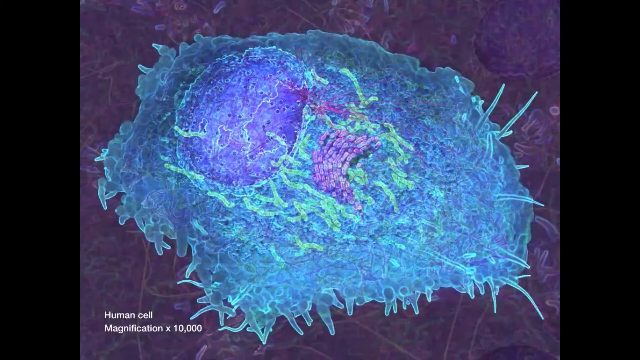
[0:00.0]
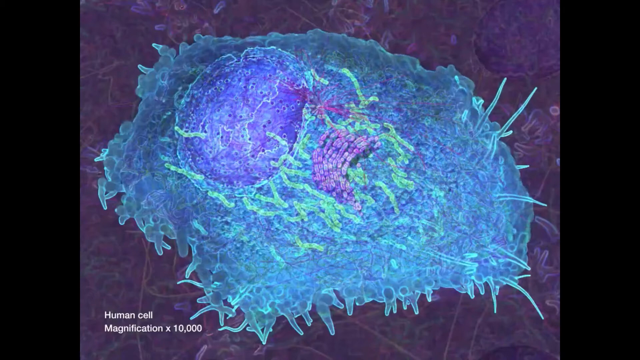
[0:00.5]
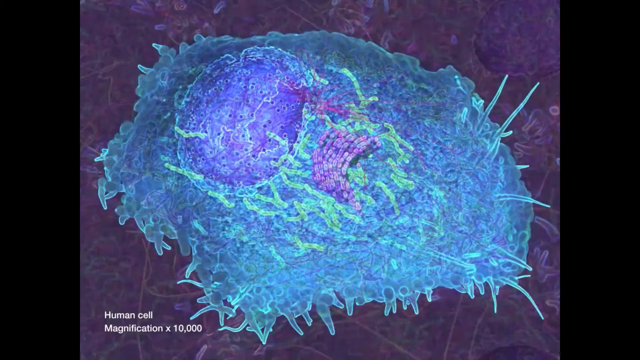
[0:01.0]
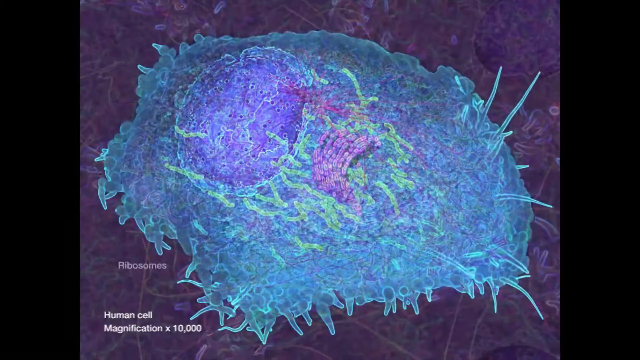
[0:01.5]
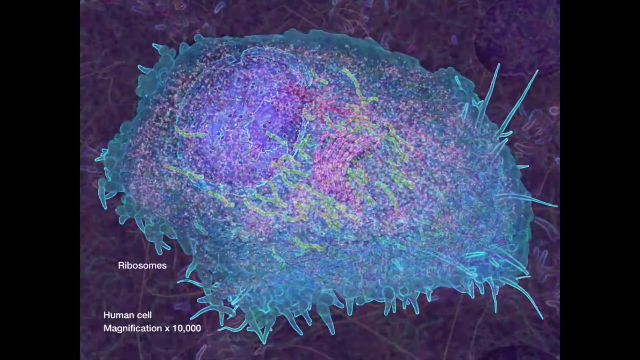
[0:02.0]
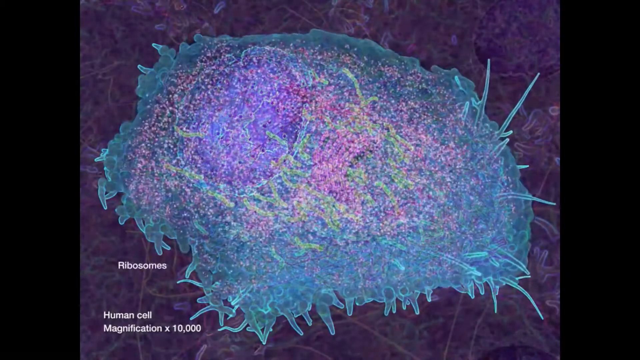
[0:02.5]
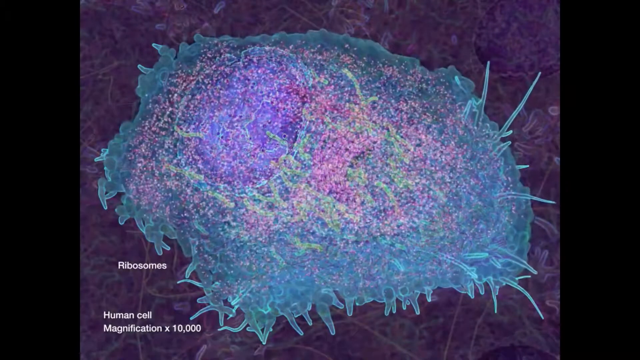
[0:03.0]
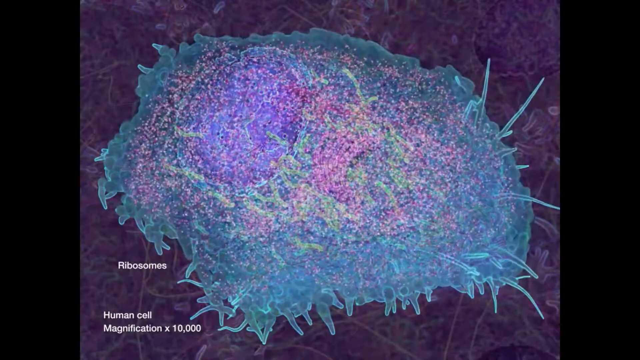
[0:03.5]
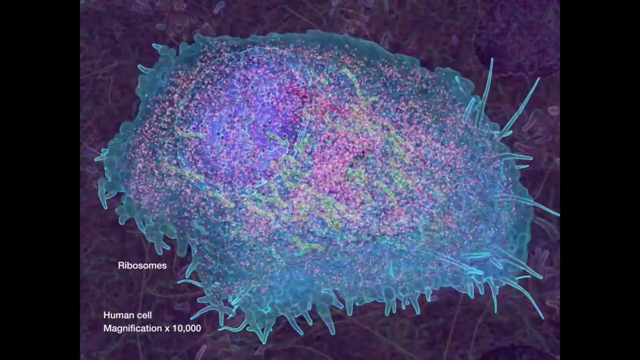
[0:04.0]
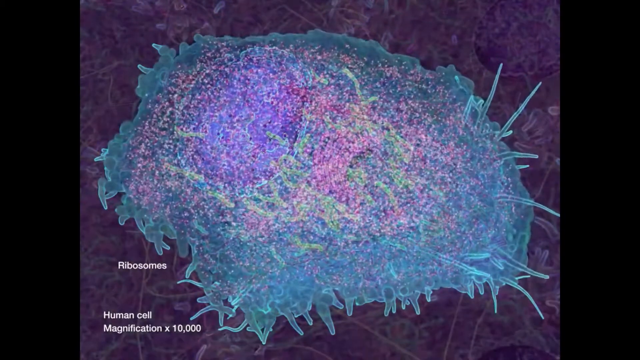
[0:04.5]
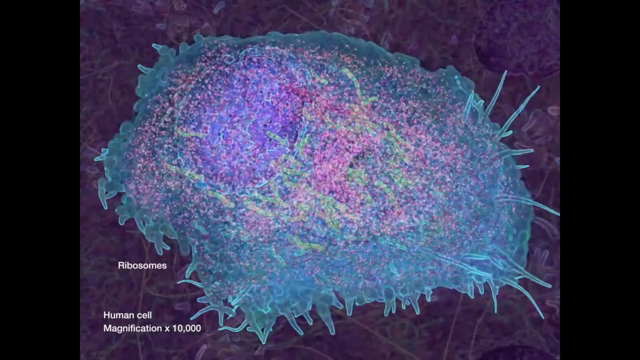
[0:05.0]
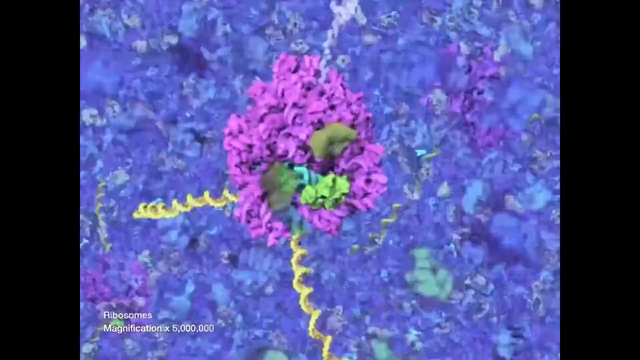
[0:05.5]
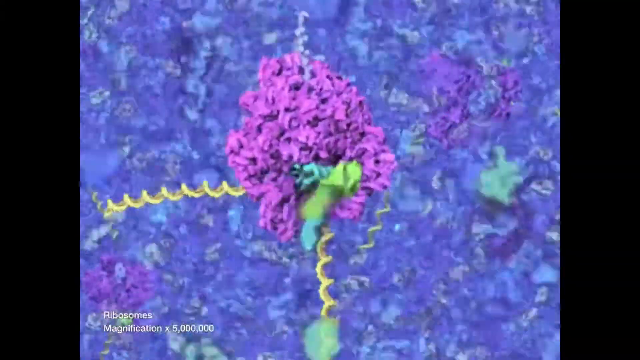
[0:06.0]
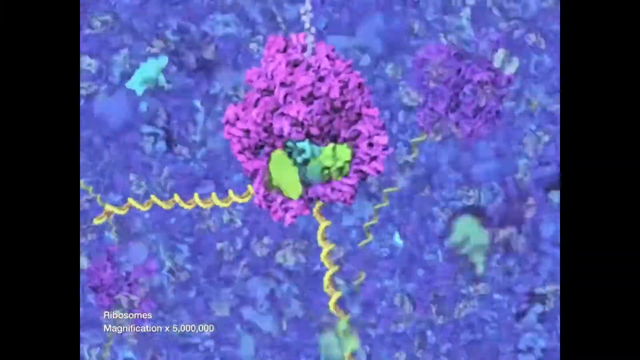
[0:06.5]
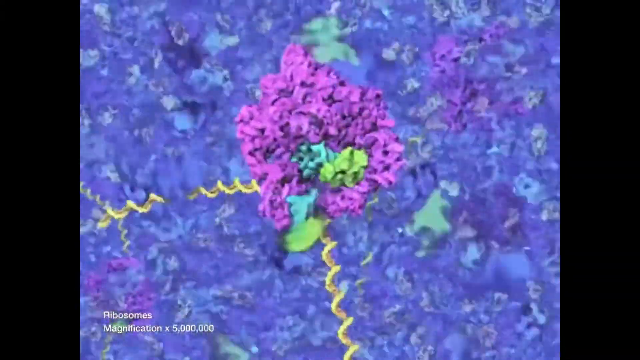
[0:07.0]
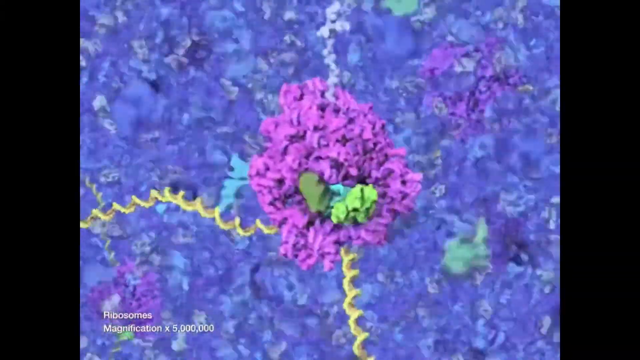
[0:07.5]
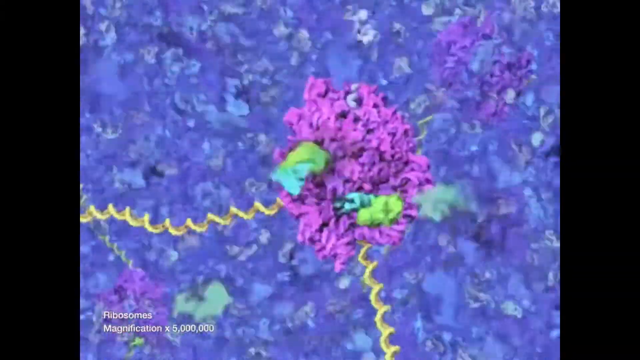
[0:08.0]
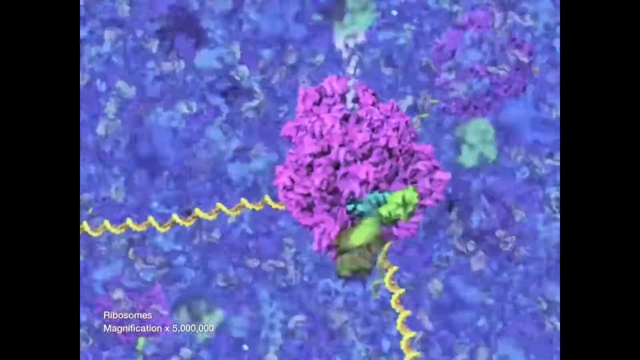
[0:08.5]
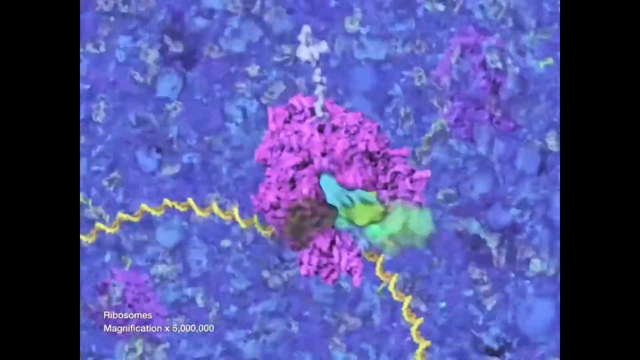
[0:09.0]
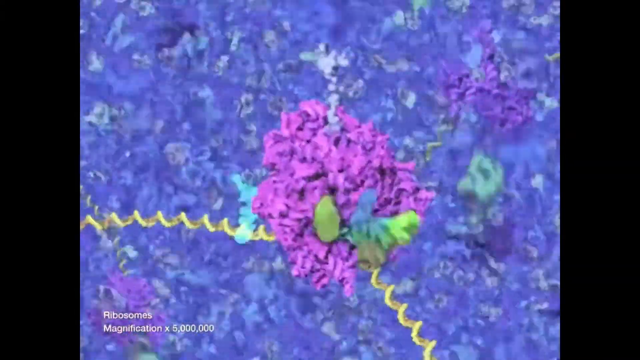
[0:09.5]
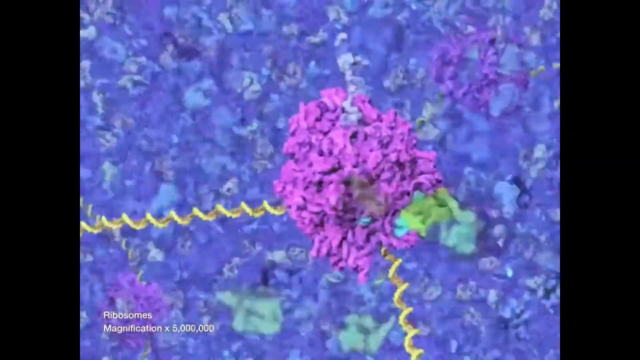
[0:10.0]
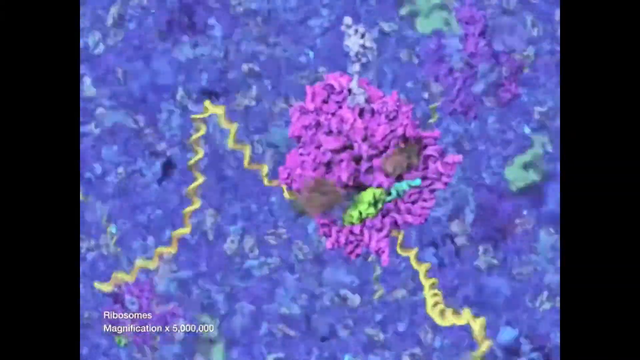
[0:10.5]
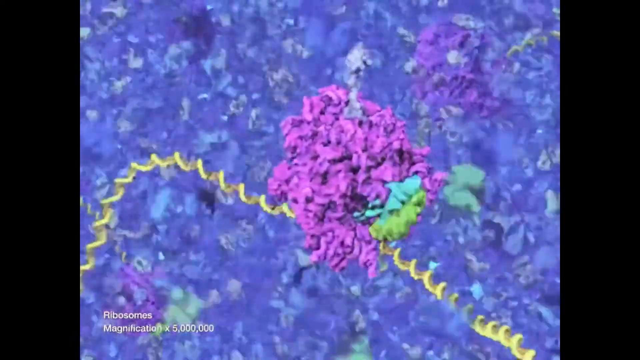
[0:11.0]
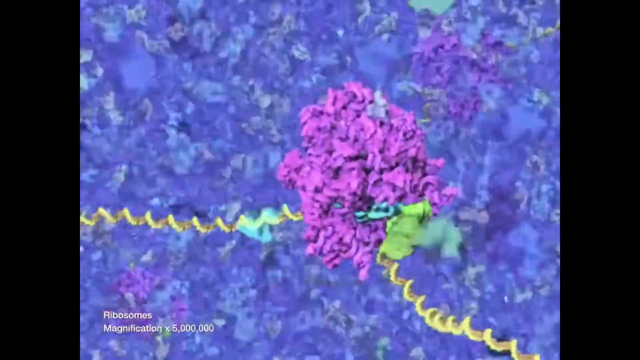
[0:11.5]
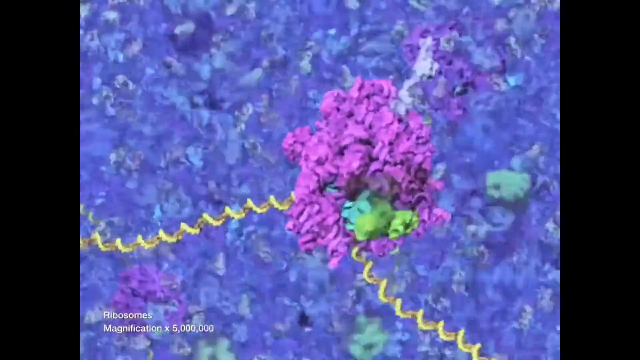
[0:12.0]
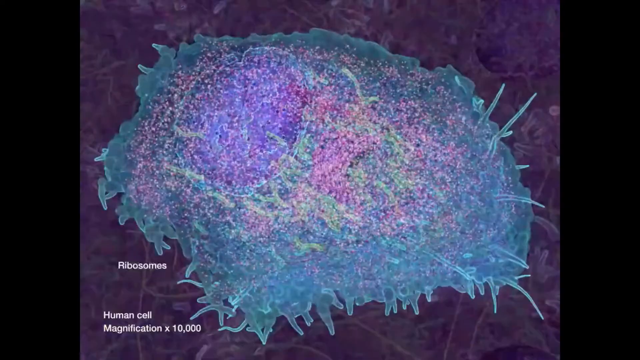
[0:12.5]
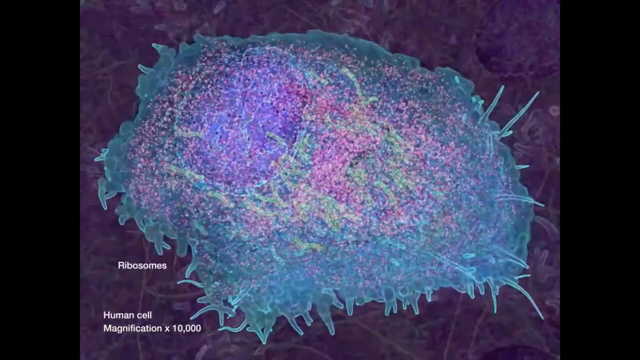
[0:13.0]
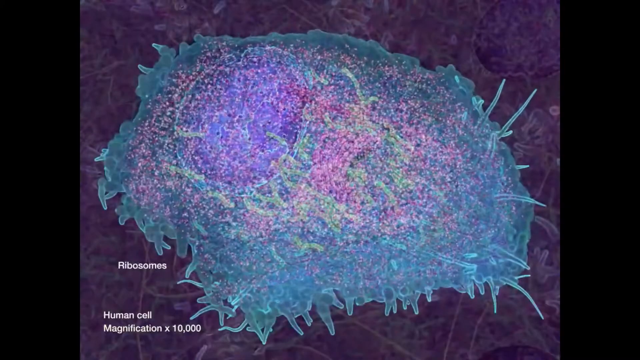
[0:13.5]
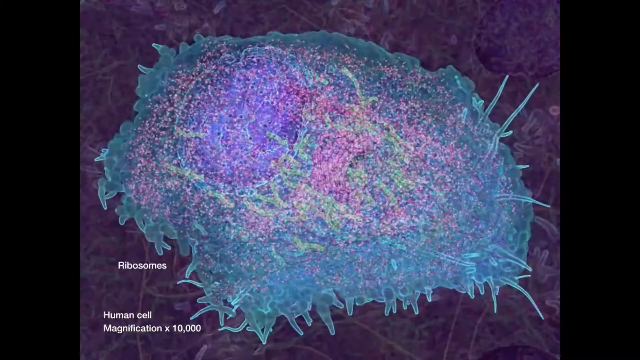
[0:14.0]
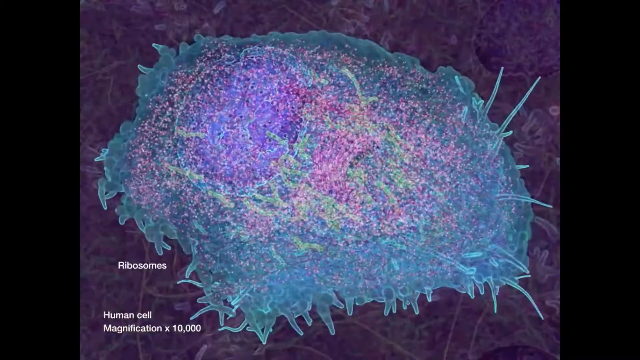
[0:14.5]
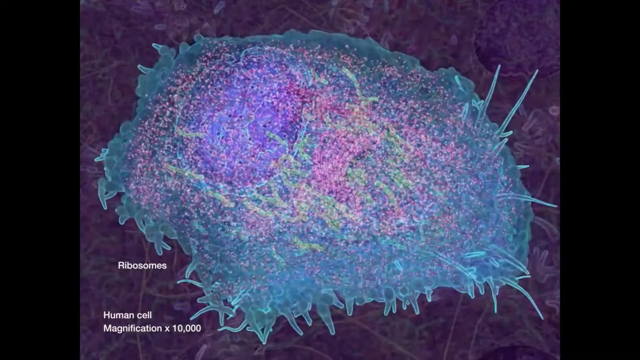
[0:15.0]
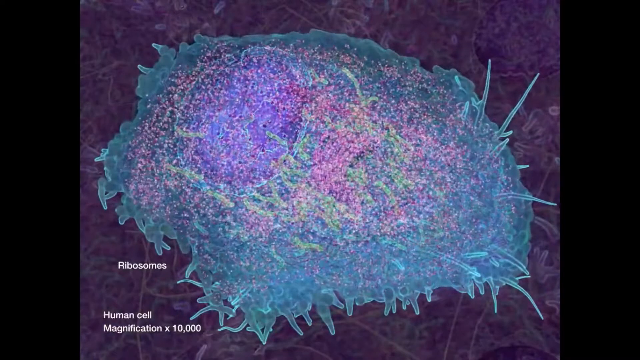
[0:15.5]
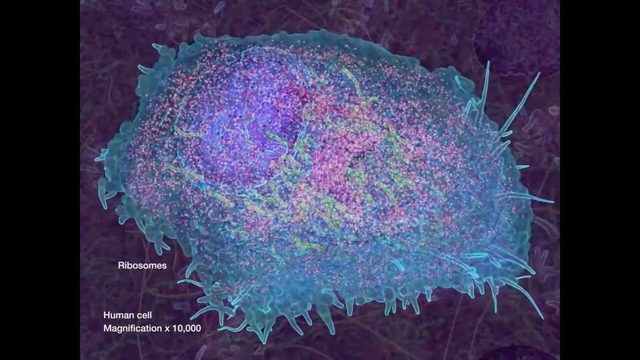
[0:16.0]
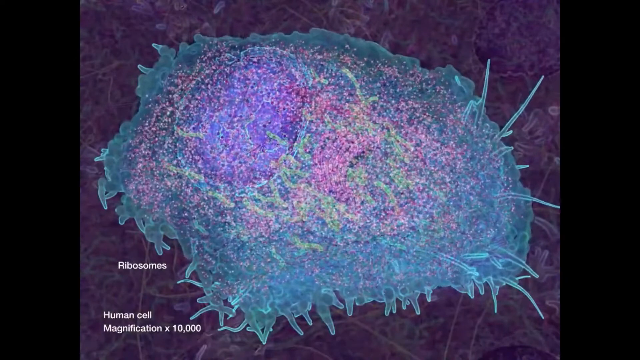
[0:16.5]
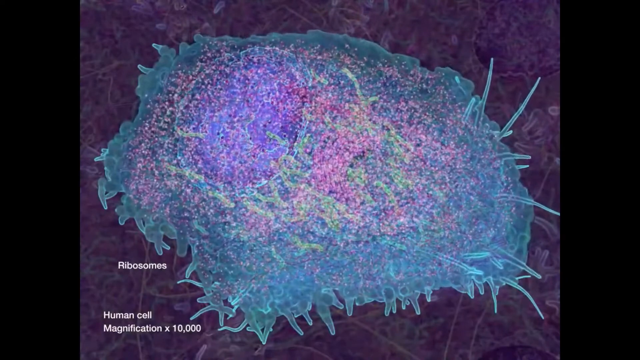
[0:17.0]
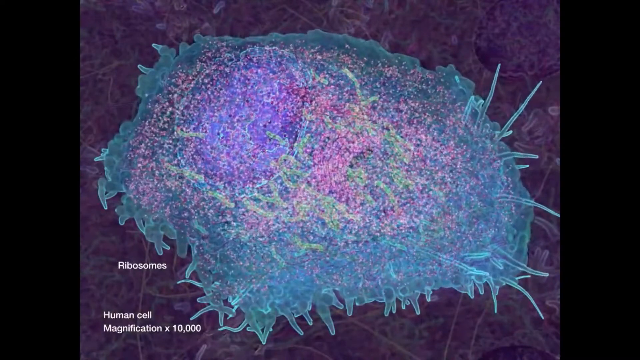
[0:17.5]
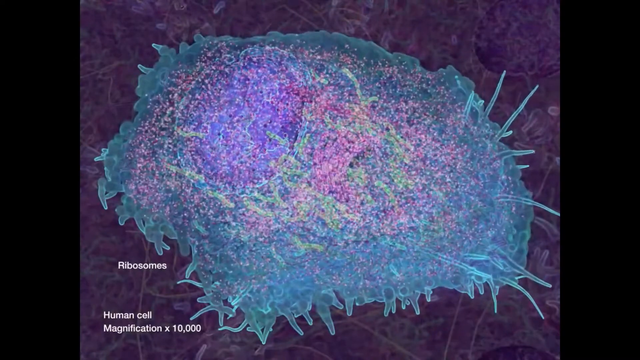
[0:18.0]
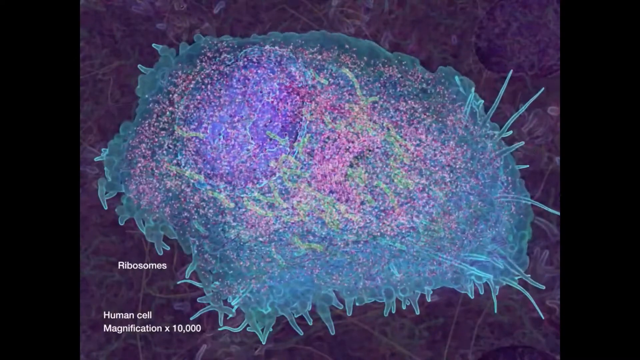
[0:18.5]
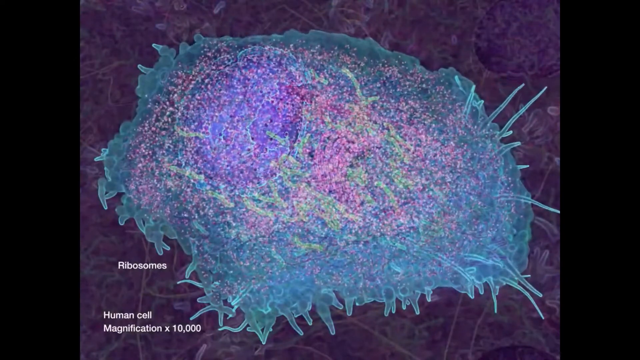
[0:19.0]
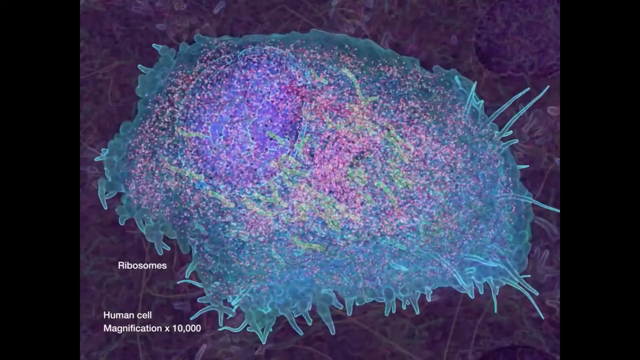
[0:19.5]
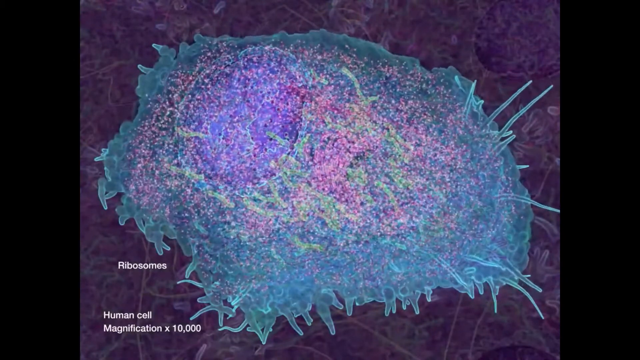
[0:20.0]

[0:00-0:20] The video uses heavily pigmented coloring: a lot of purple in different hues, along with some green and some blues. It shows a cell, with text saying it is a human cell at a magnification of 10,000. There are labels on the image, one indicating ribosomes. While showing the big cell, the view shifts focus to some sort of middle cell whose center is purple, with green, spiral-like things attached to it. Blue and green movement surrounds the cell. The background seems very busy, with a lot of movement, looking kind of like a whole bunch of butterflies trying to fly at once. The coloring seems to make the different parts of the cell a little easier to see.